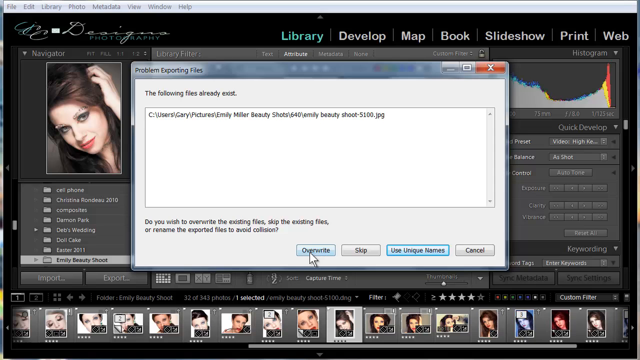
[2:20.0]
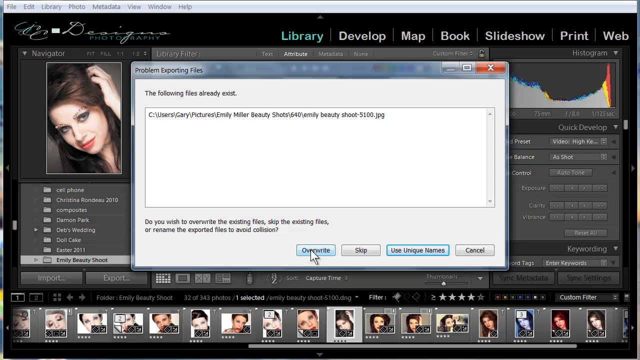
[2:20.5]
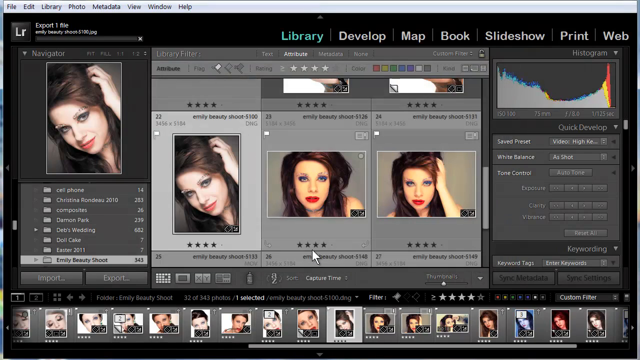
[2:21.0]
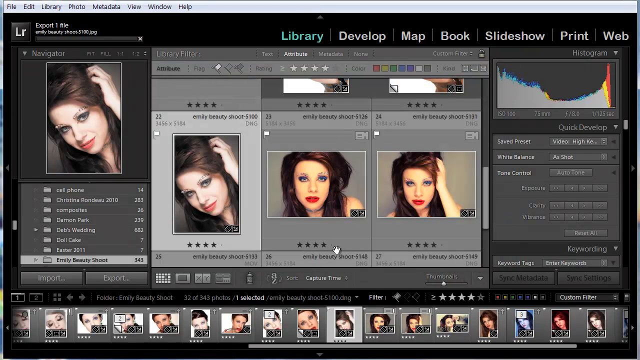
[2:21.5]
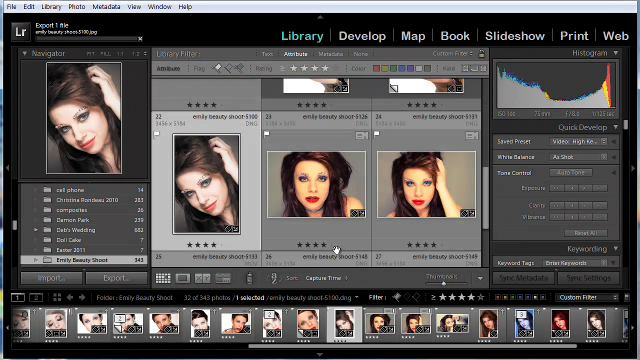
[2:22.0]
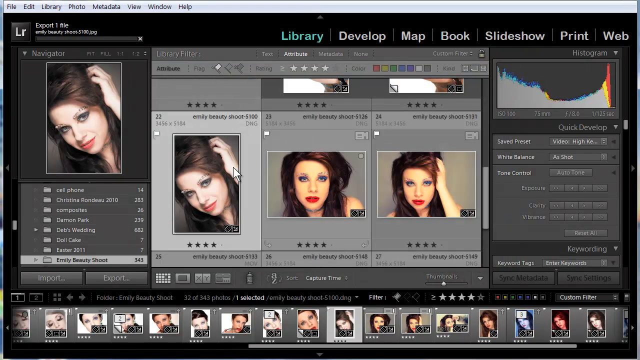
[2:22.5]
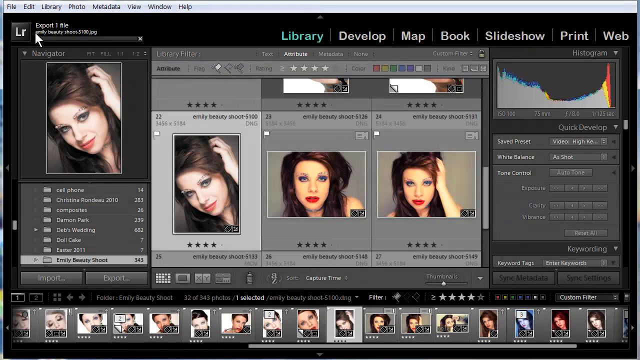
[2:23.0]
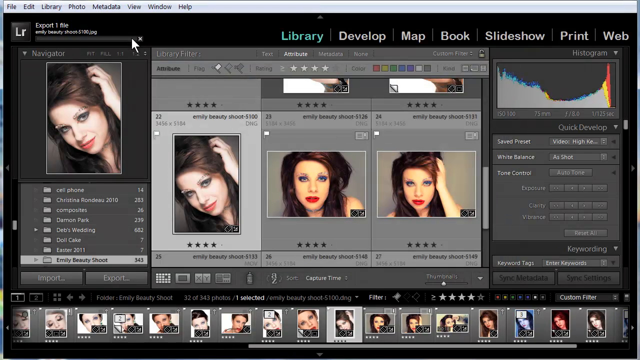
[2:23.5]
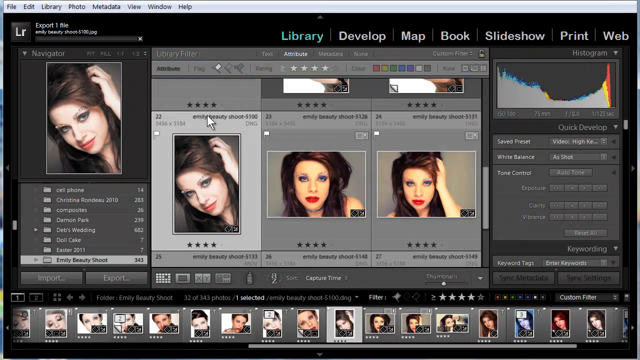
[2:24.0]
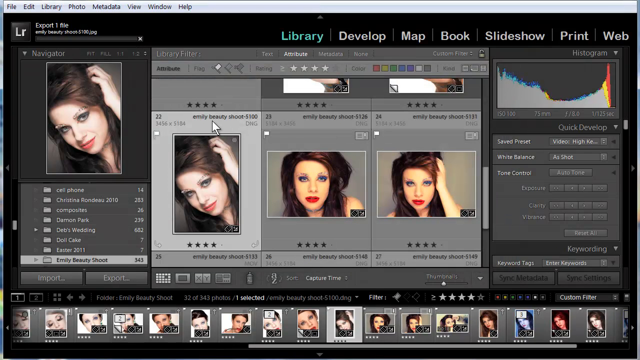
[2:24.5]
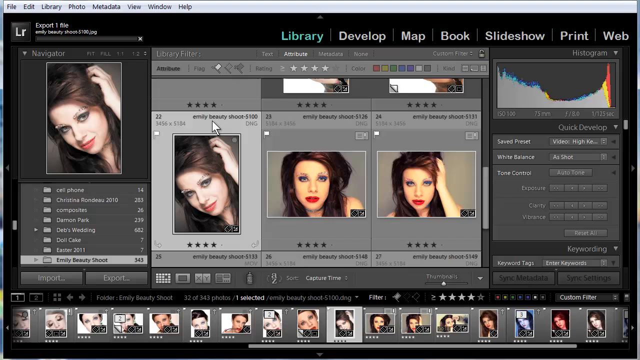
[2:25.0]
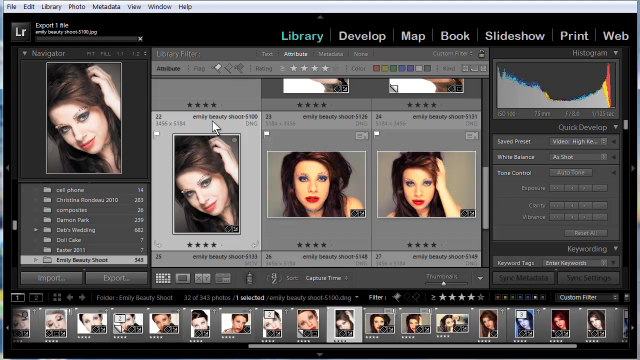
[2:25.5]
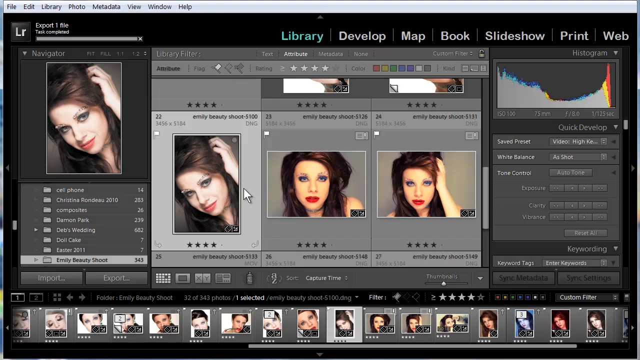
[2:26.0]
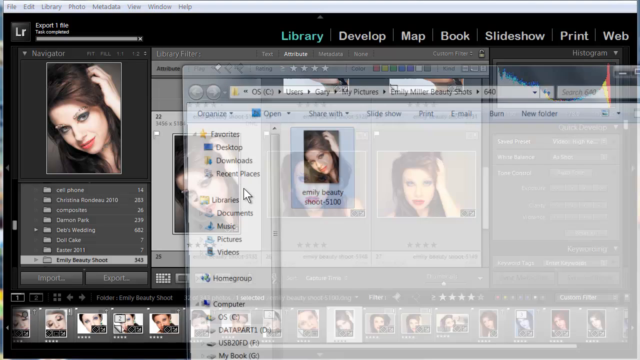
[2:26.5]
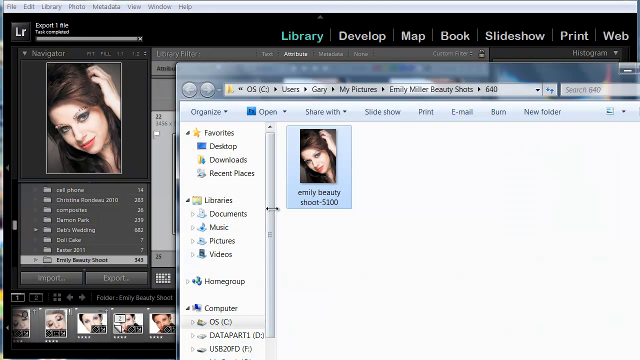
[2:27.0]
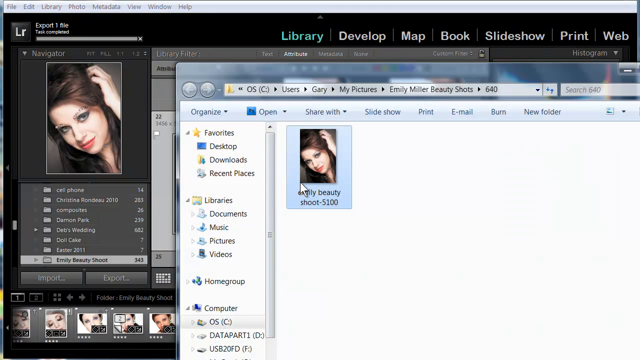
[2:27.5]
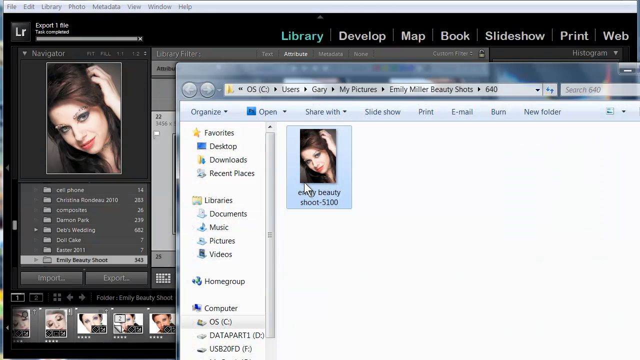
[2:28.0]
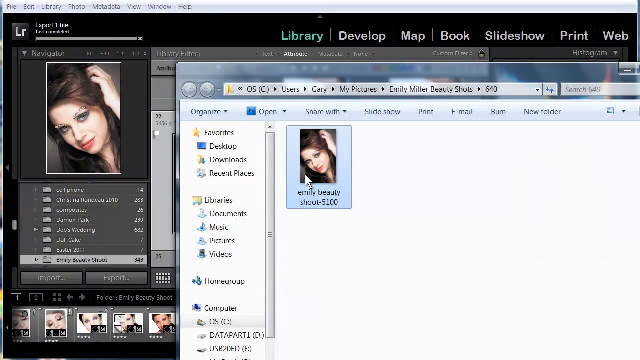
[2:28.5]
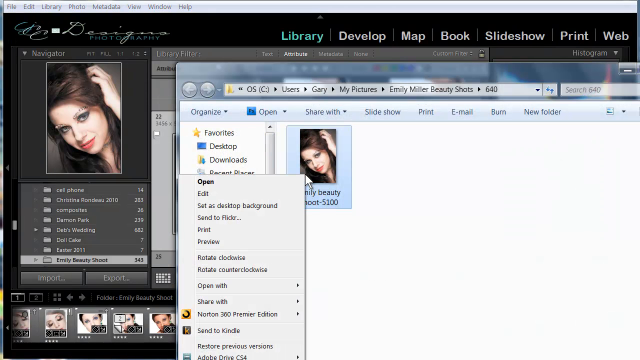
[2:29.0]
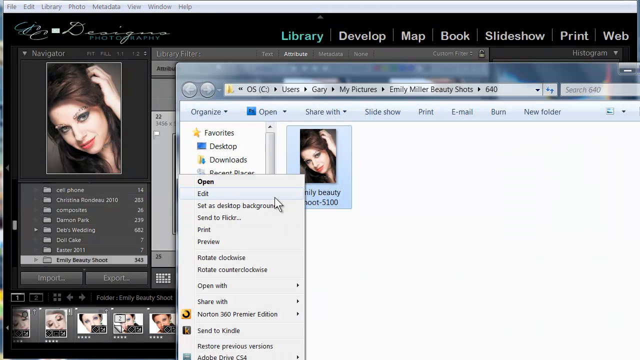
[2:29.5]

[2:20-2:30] Back in the image software, after choosing to overwrite the existing image with the exported, watermarked image of the woman, the user moves the cursor over the image and double-clicks it. A file explorer opens showing "Emily Beauty shot 5100", the file that was exported. The user right-clicks on the image to open the file.